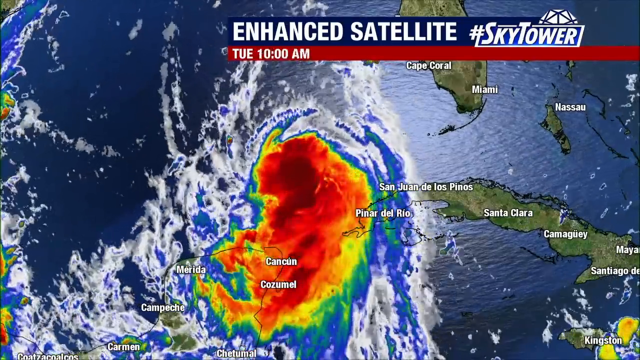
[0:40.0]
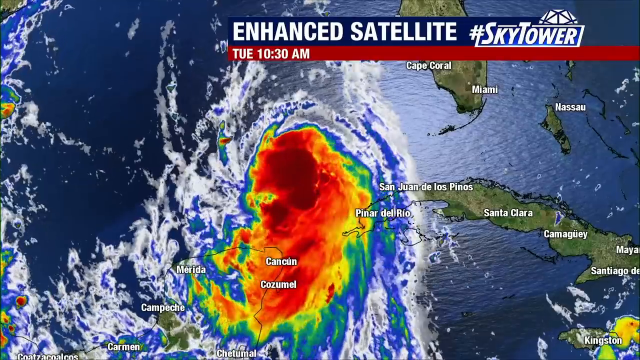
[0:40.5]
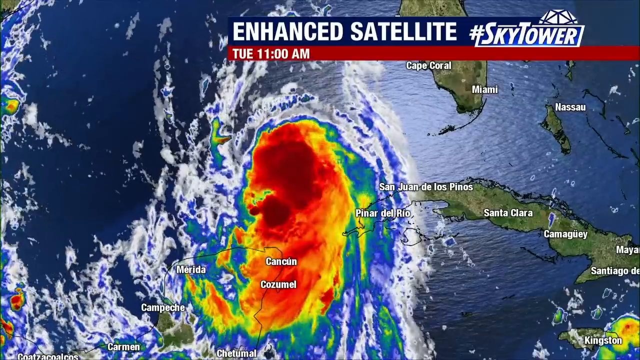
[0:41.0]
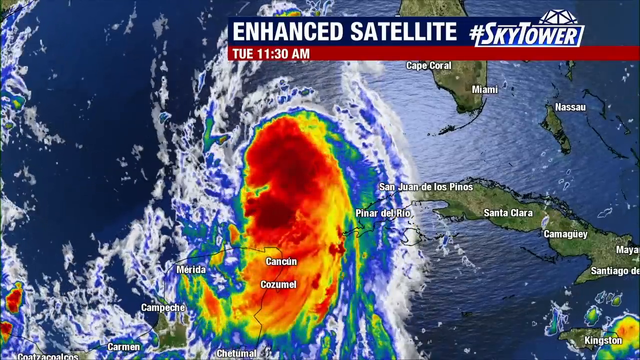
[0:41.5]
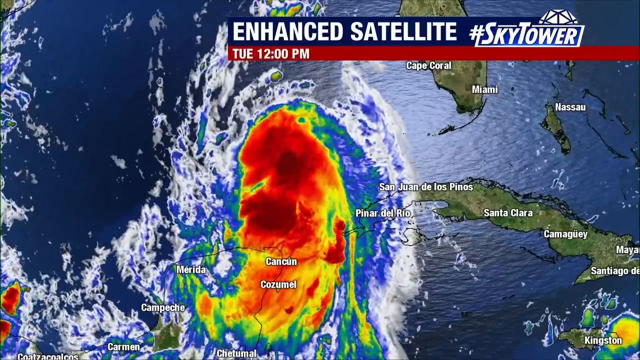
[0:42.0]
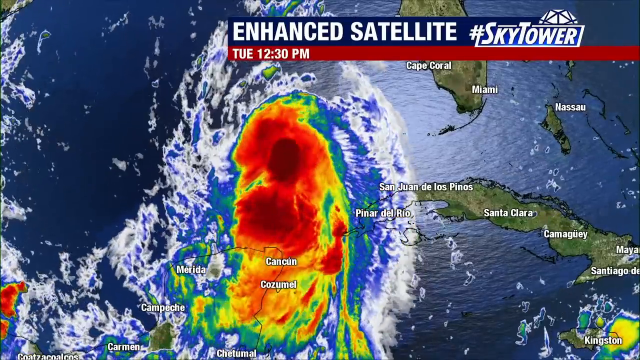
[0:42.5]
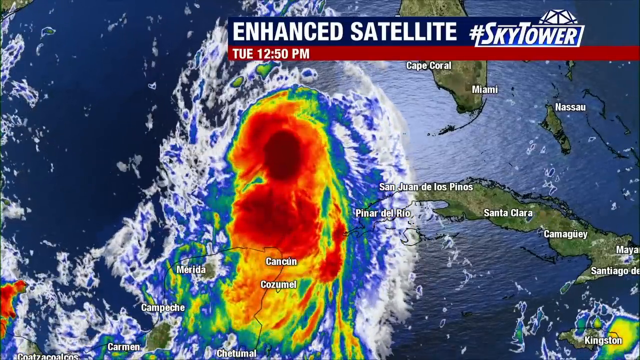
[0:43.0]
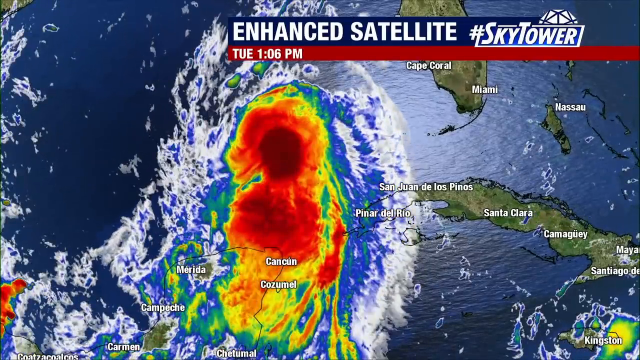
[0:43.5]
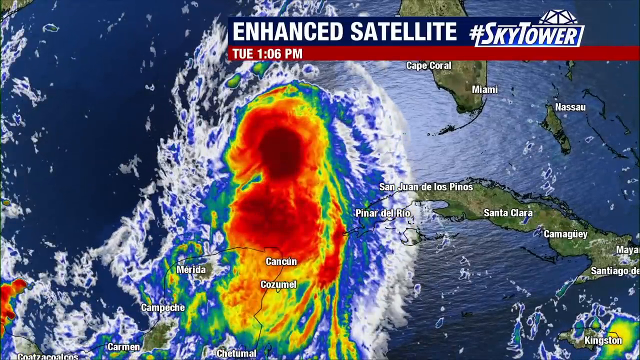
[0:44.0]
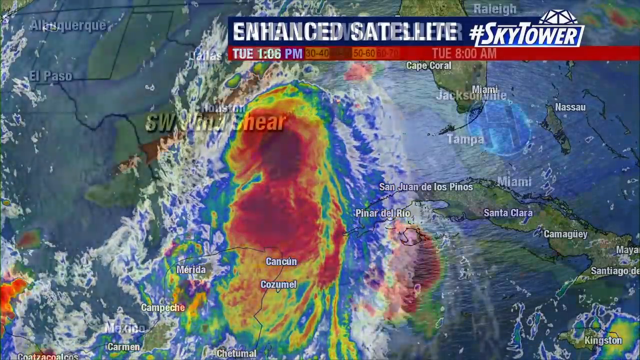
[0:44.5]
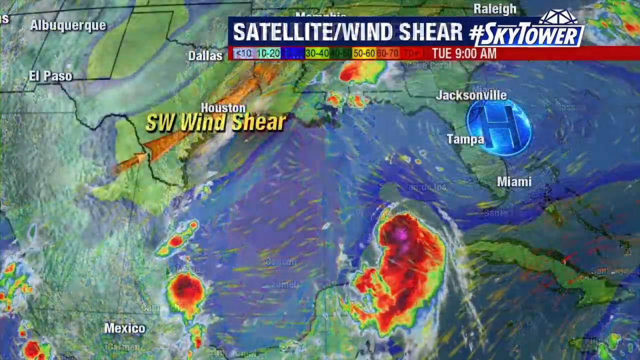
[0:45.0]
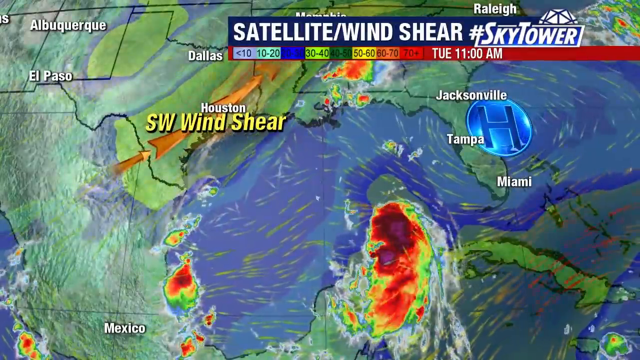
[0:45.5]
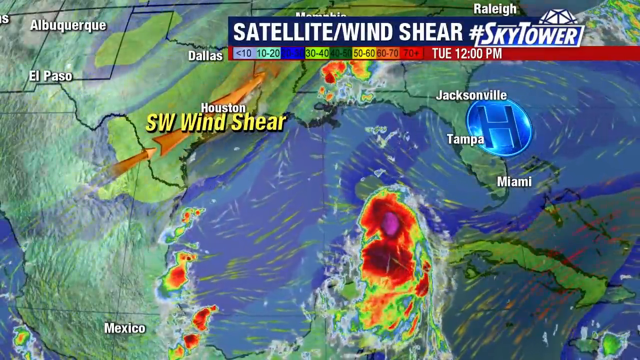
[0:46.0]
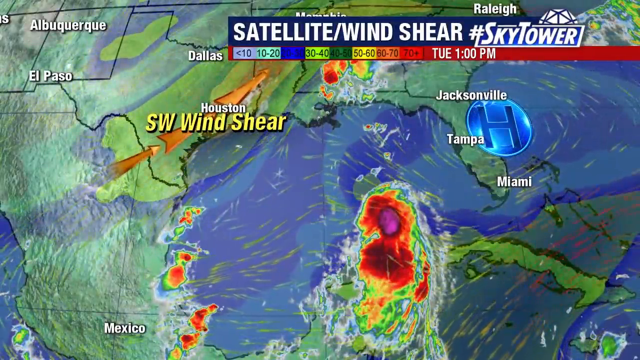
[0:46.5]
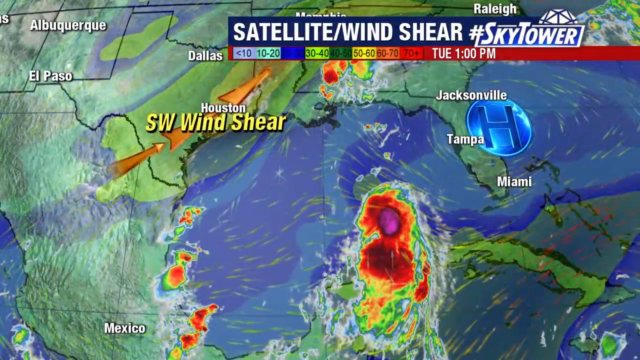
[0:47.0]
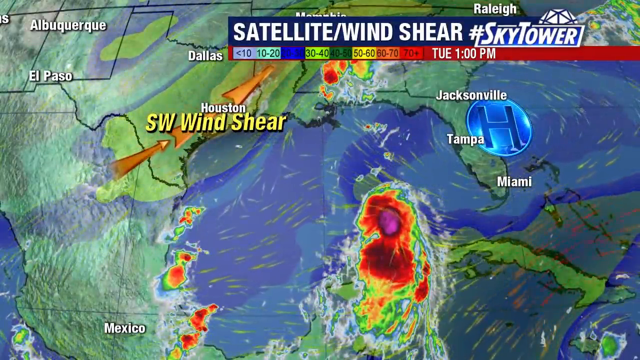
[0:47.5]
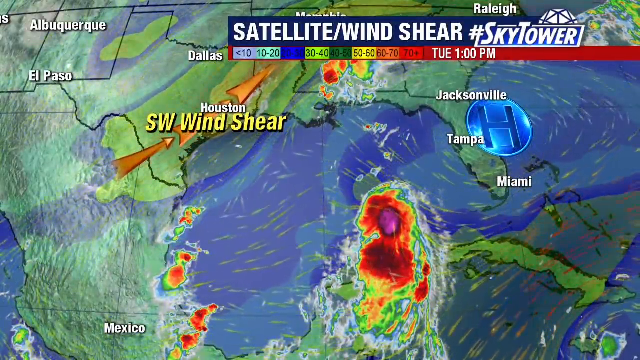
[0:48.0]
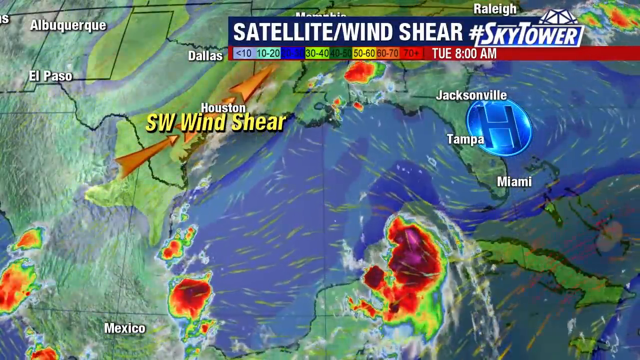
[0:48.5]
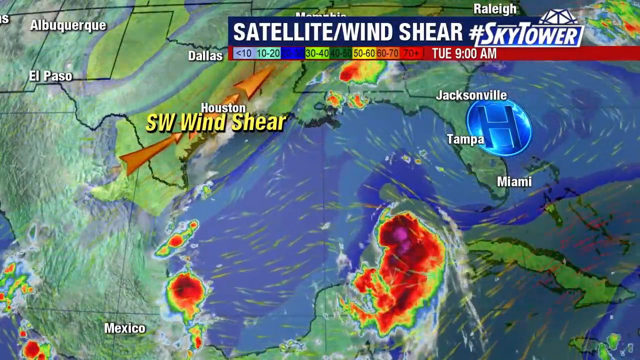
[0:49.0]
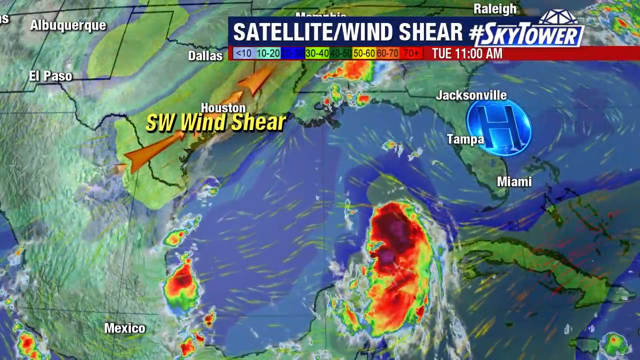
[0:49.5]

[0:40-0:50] The map now shows Tuesday at 10 a.m., focused on the same area. Cancun and Cozumel are in the middle of the screen, with the intense red right around them; the red is spinning and even turns a pinkish or maroonish color. The map then pulls out to show satellite wind shear along with wind speeds in miles per hour. Florida appears to have winds of about 10 to 20 miles per hour, while the red sections over Cozumel and Cancun are over 70 miles per hour; this map is from Tuesday at 10 or 11 a.m. The wind shear is shown kind of moving over Texas to the northeast, and another small storm is visible on the other side of Mexico, far less intense than this one.